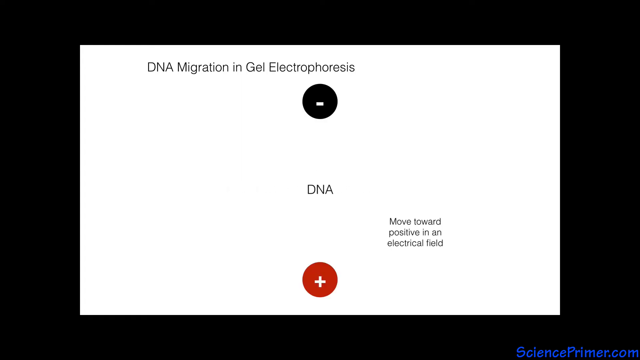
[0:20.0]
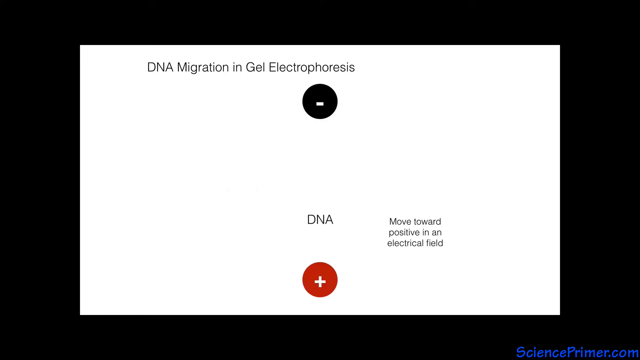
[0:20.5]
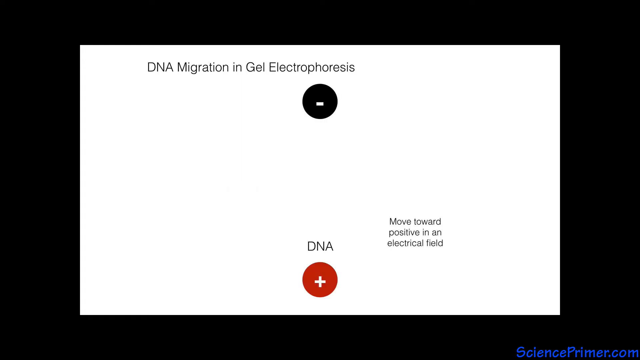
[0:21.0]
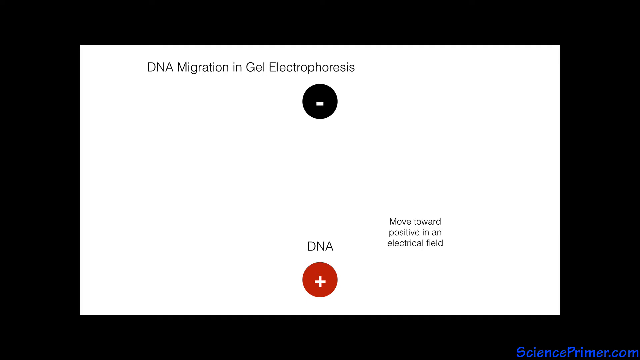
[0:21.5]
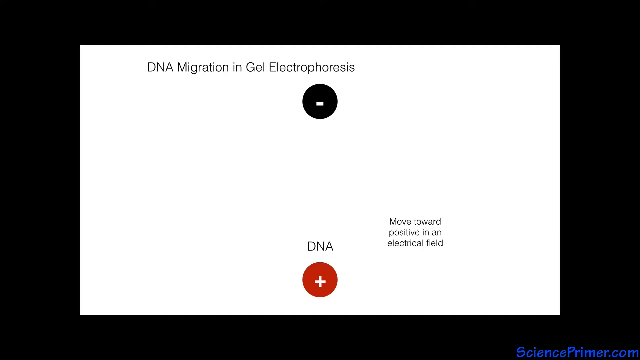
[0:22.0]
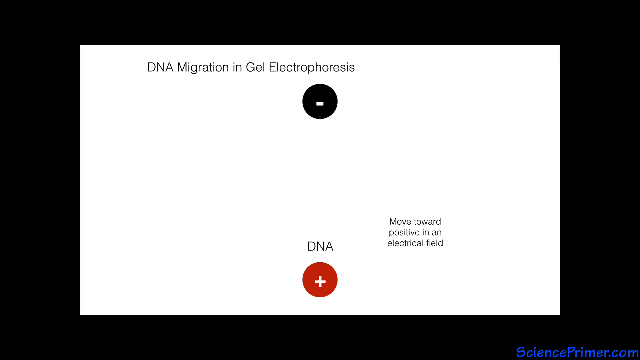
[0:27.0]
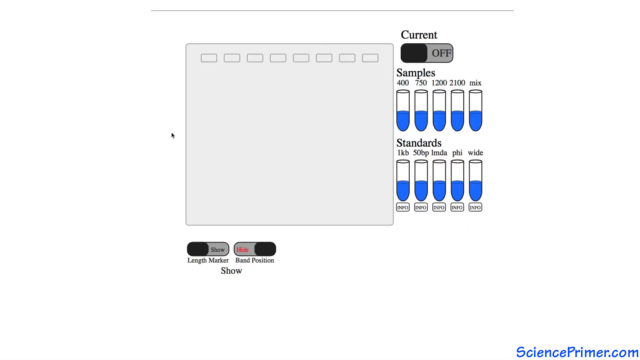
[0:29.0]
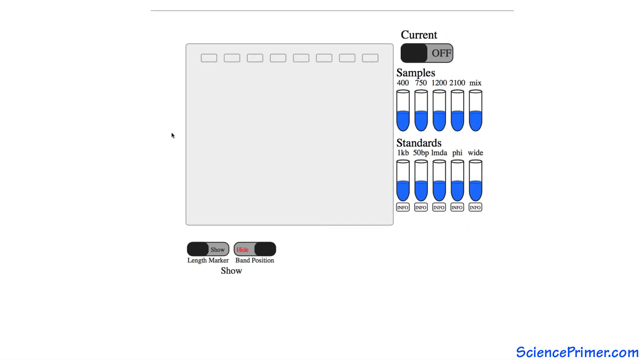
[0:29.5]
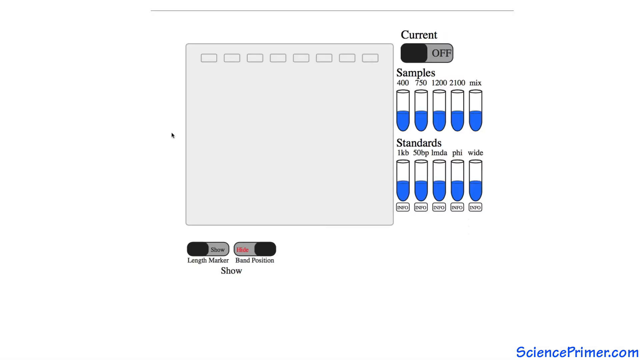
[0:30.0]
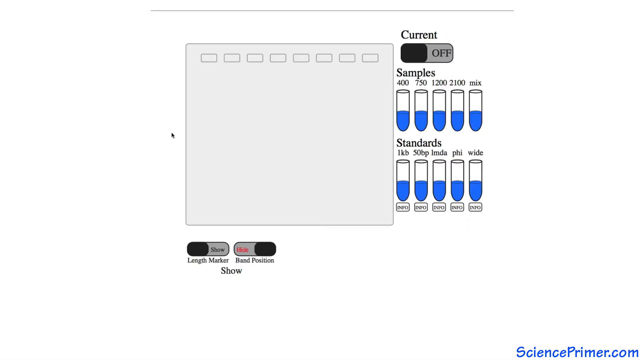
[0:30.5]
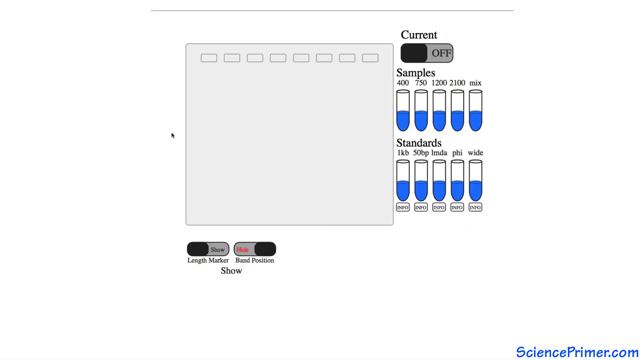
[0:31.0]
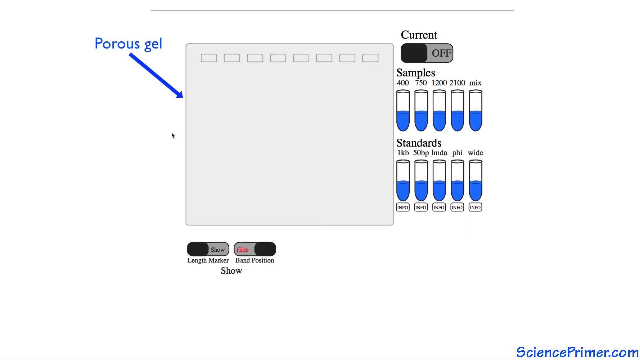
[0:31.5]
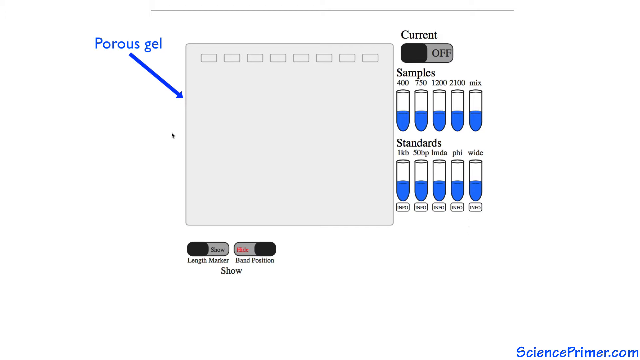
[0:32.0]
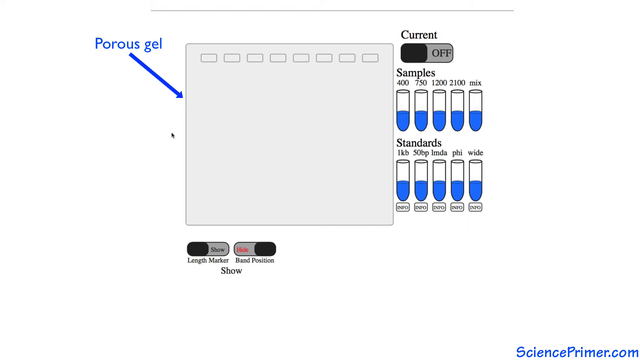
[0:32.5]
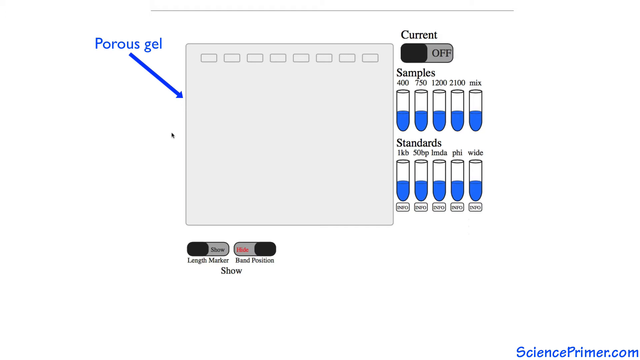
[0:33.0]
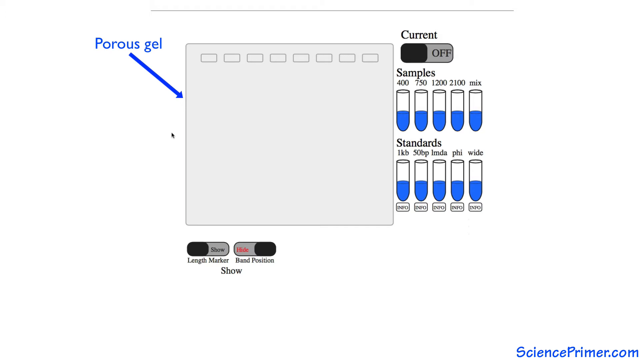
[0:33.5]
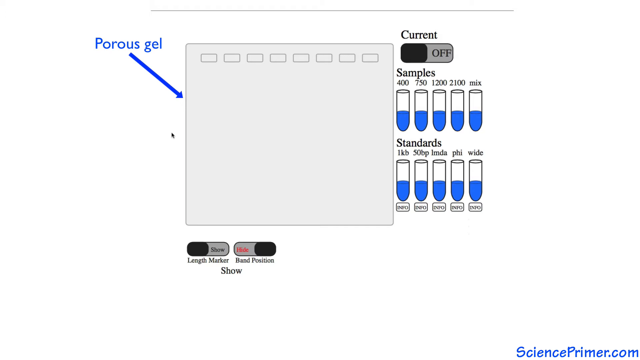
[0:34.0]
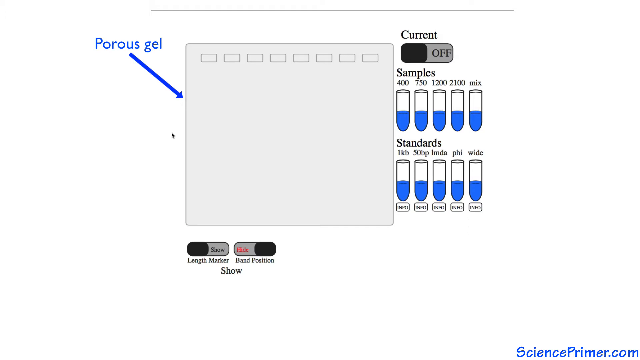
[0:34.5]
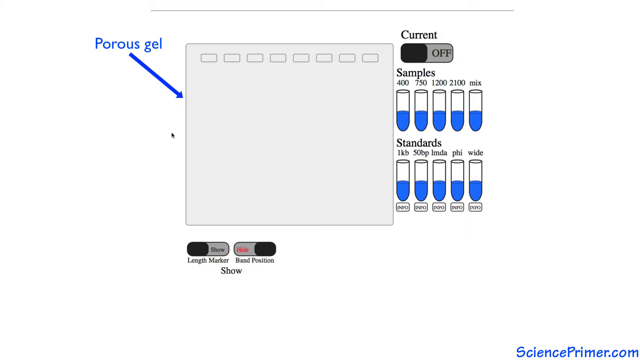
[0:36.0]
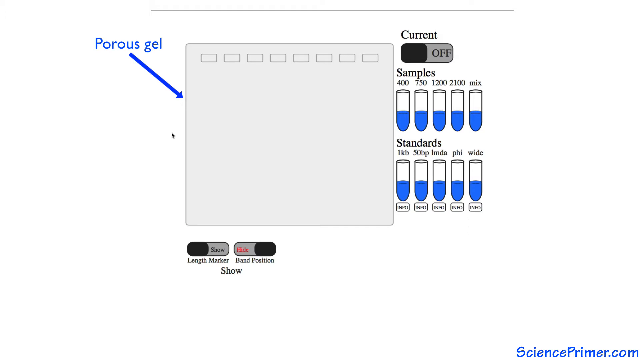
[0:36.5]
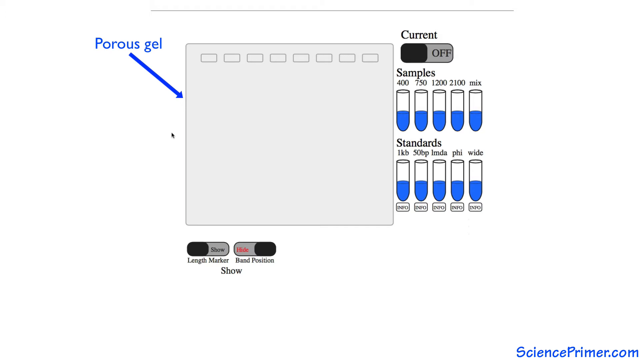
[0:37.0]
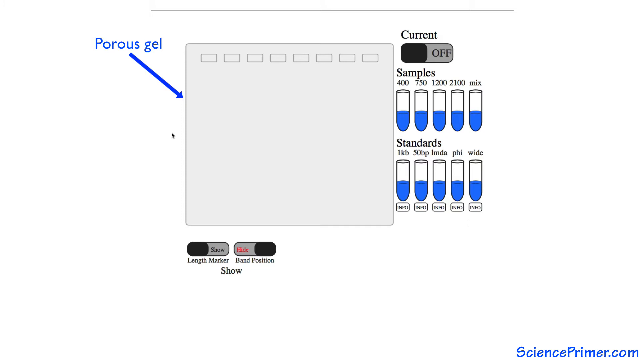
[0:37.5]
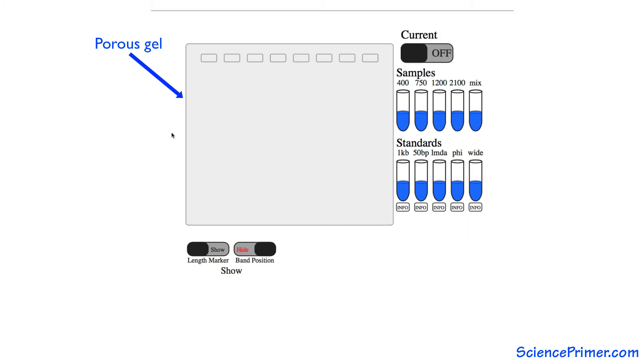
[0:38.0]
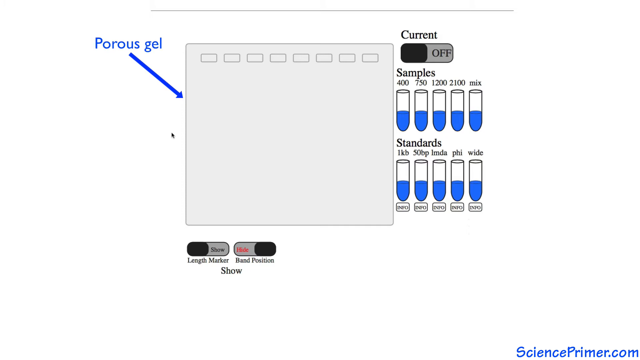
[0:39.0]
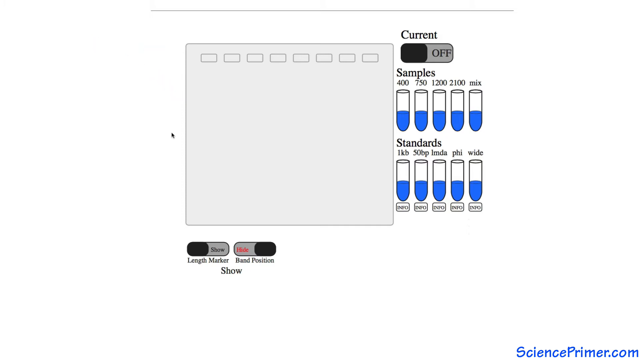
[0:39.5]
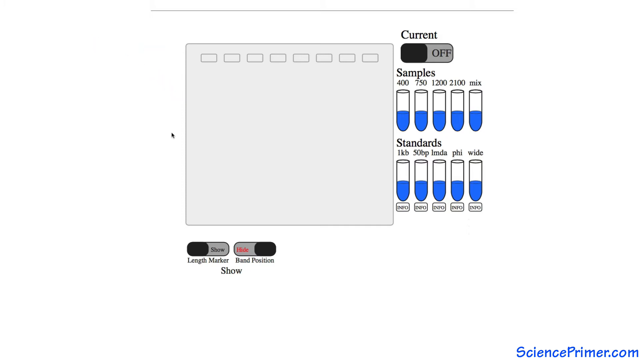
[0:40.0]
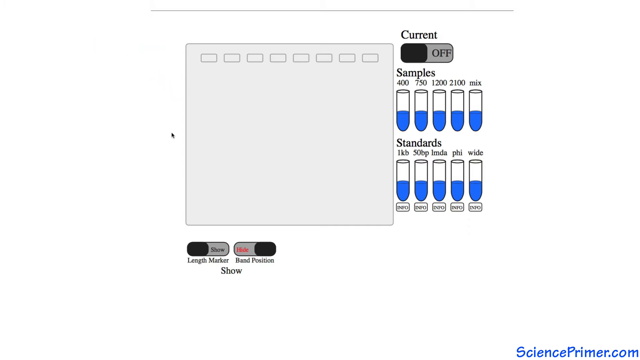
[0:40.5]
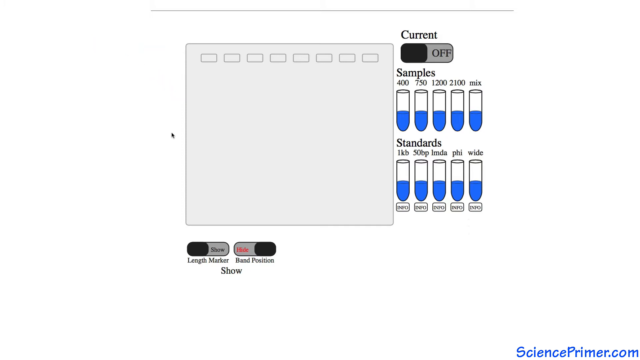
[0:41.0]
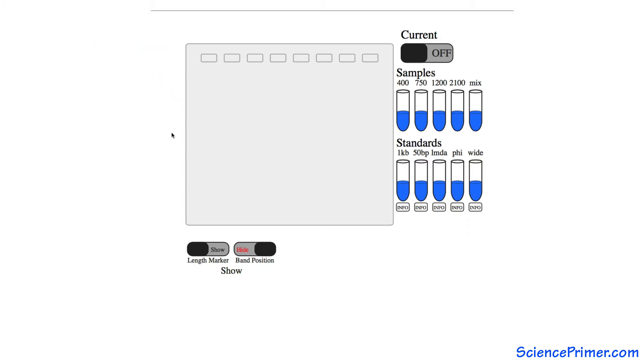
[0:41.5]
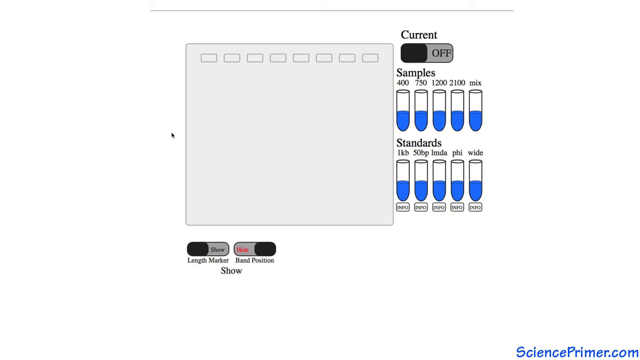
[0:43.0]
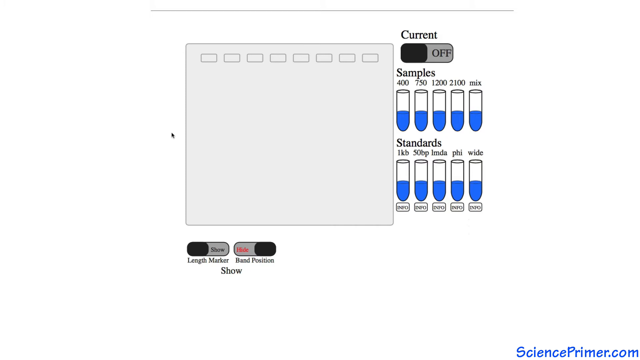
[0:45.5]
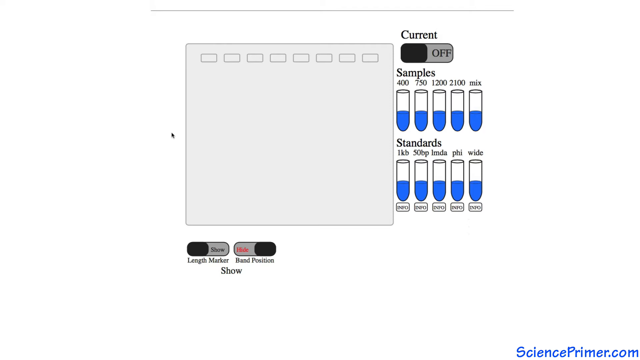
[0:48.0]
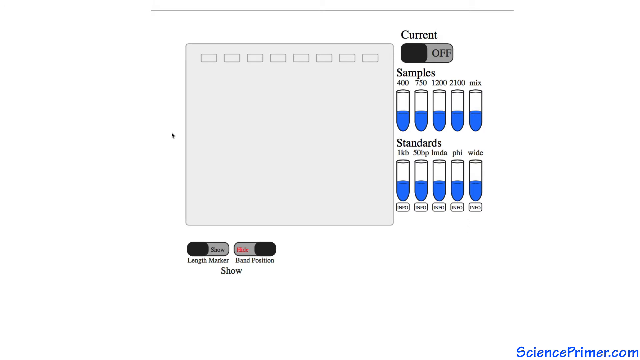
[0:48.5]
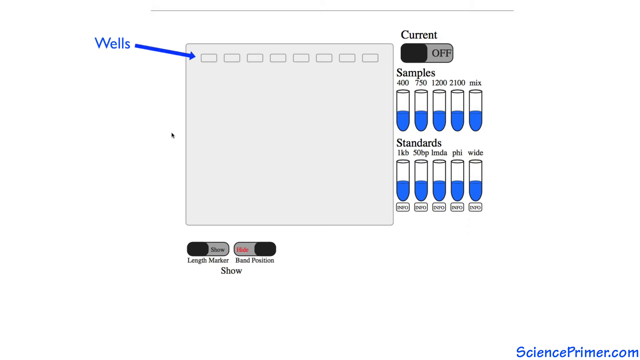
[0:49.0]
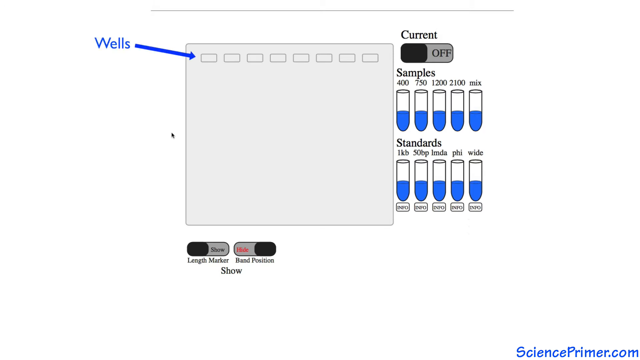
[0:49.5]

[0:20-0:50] The DNA finishes moving down and stops just at the top of the red circle with the white plus sign inside it. An image appears that seems to be a computer interface featuring a lab assignment. It shows a gray rectangle with smaller gray rectangles lining its top. A blue arrow points to the larger rectangle and is labeled "porous gel." There are three toggle buttons on the screen; the one on the right is toggled off and labeled "current." Underneath are 10 samples in simple drawings of test tubes with blue liquid inside, each labeled with small black text at the top. The "porous gel" text and the line pointing to the rectangle disappear. The bottom two toggle buttons are for the length marker and band position; the length marker is toggled to show, and the band position is toggled to hide.